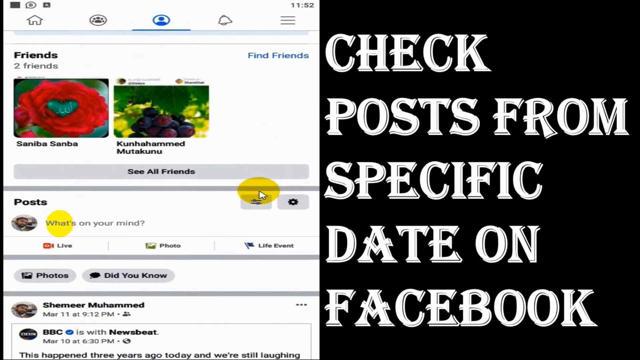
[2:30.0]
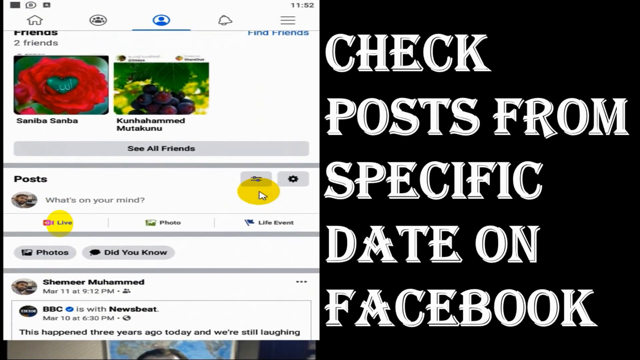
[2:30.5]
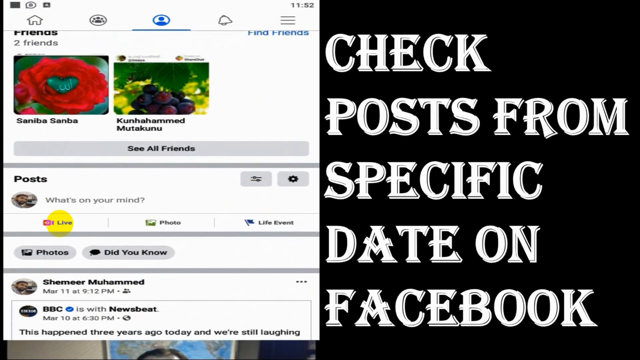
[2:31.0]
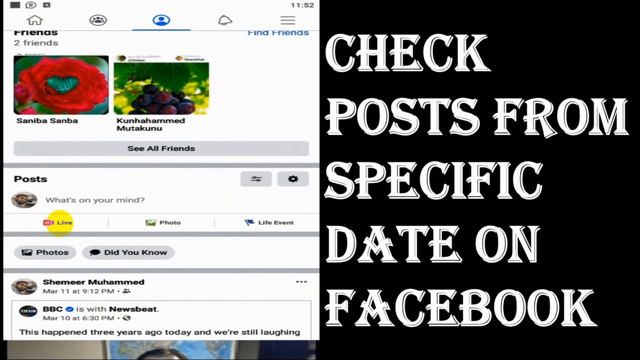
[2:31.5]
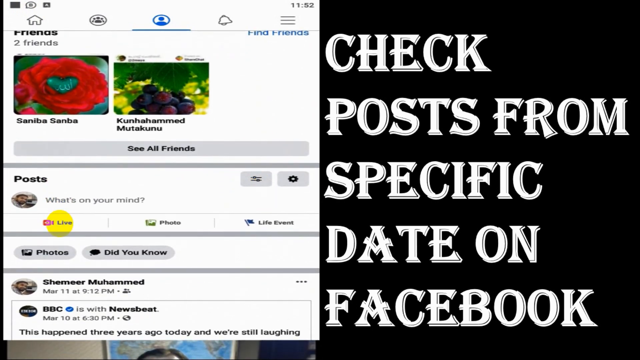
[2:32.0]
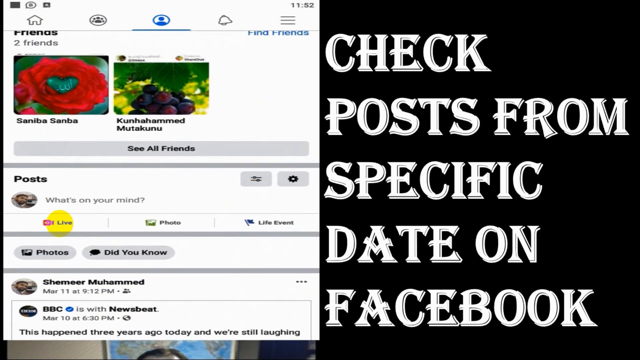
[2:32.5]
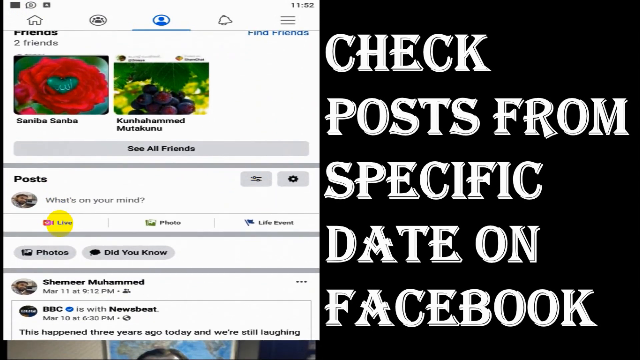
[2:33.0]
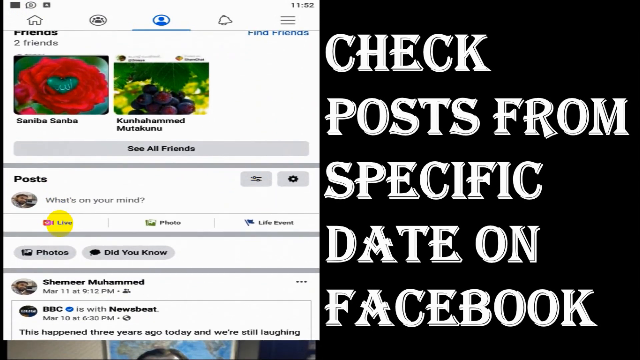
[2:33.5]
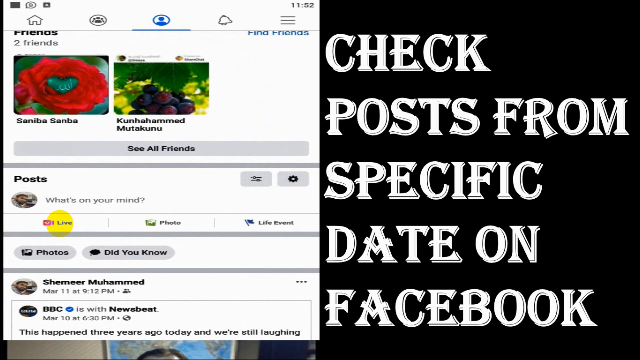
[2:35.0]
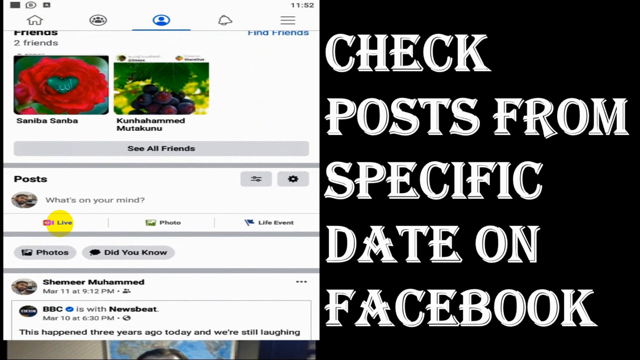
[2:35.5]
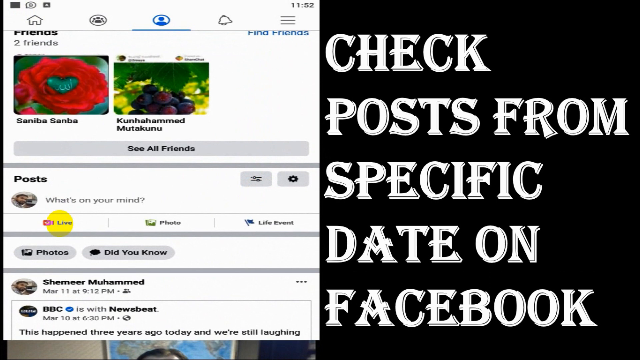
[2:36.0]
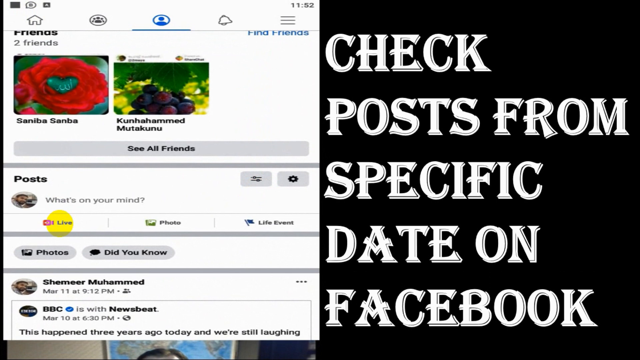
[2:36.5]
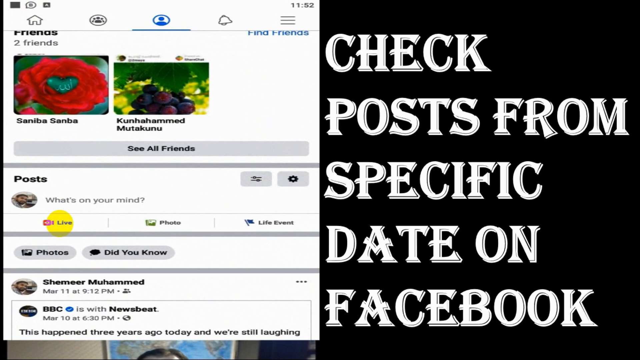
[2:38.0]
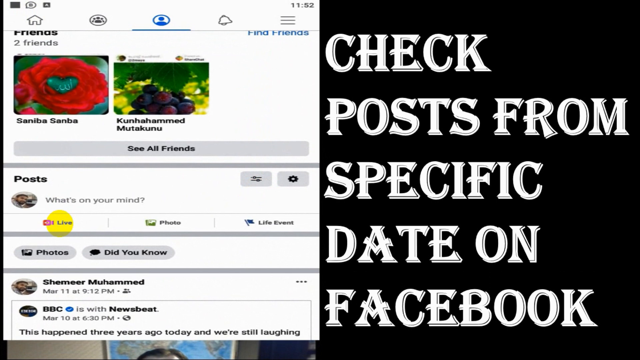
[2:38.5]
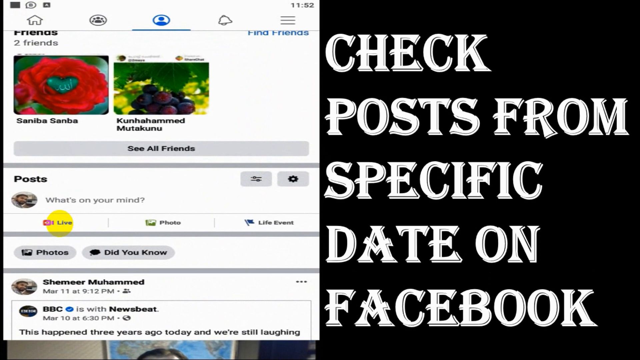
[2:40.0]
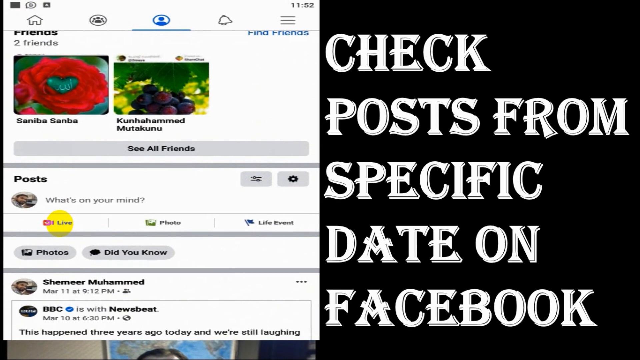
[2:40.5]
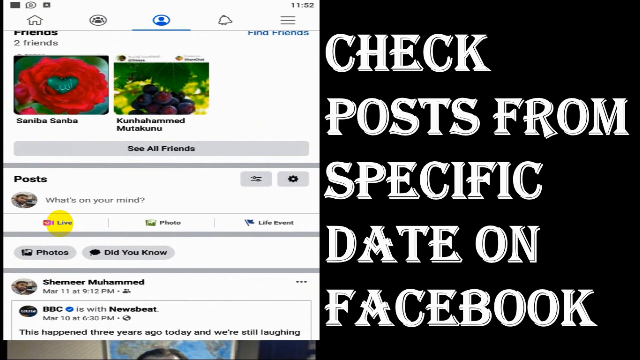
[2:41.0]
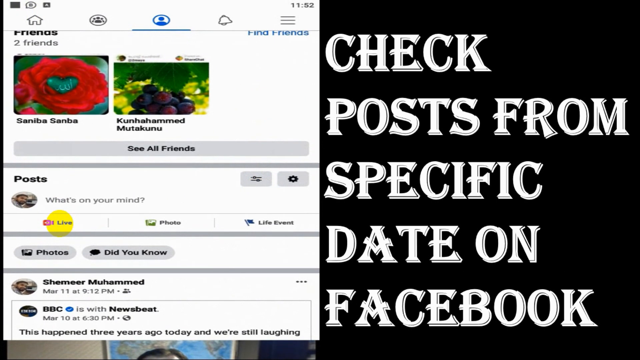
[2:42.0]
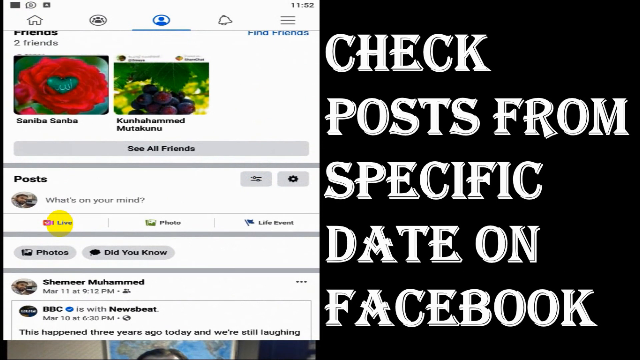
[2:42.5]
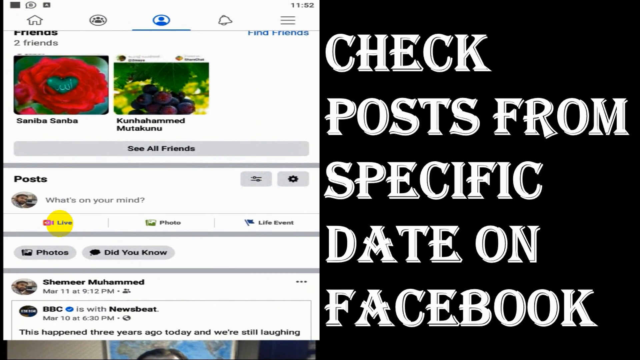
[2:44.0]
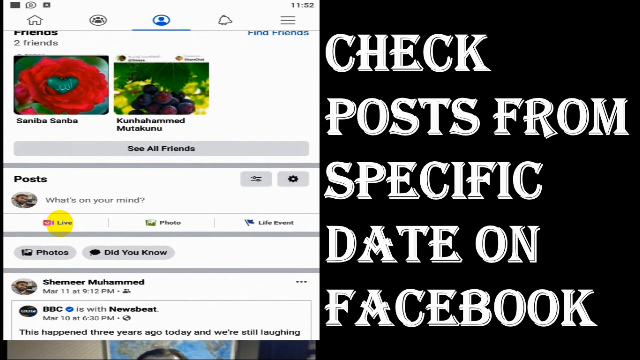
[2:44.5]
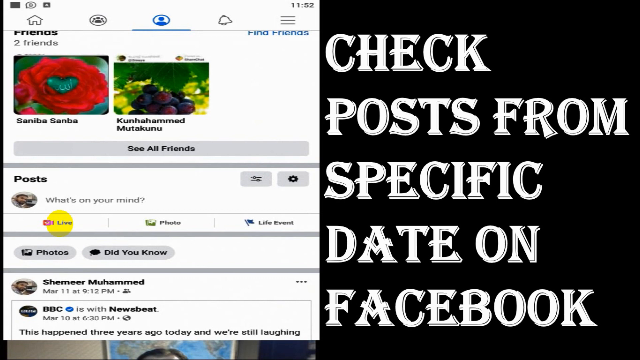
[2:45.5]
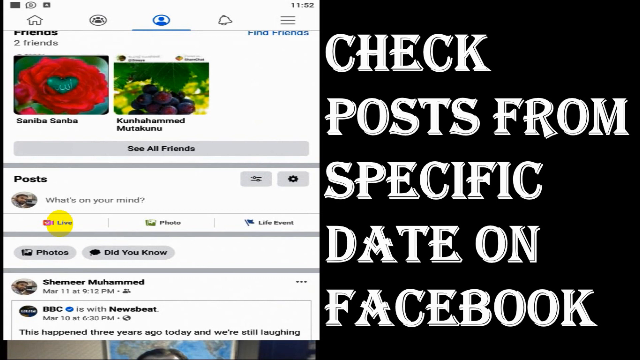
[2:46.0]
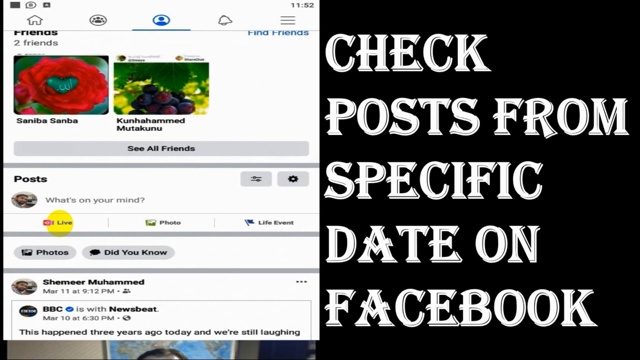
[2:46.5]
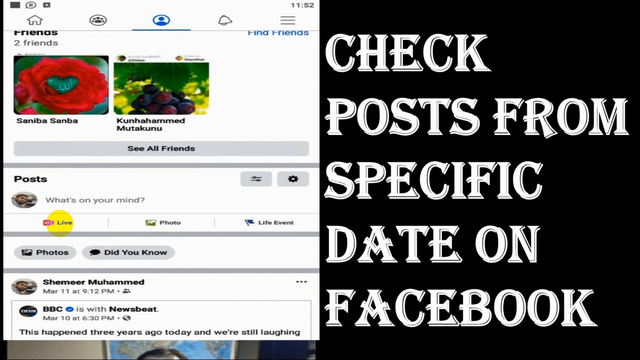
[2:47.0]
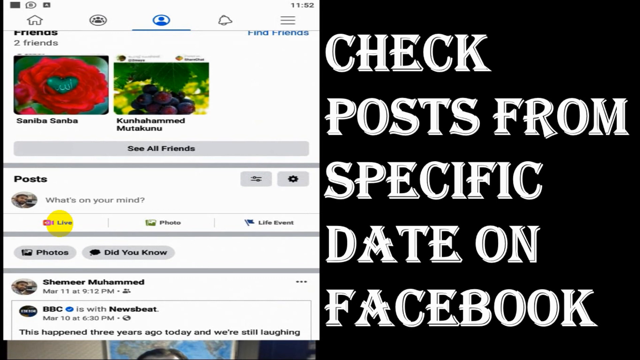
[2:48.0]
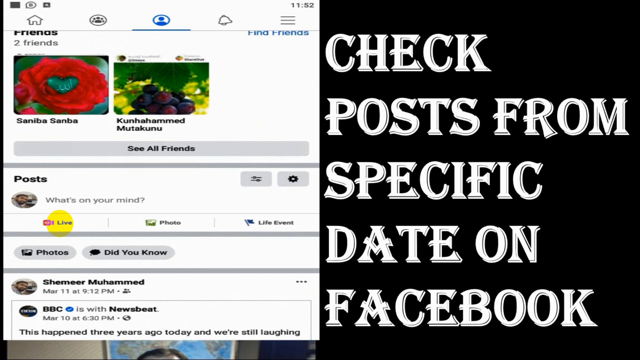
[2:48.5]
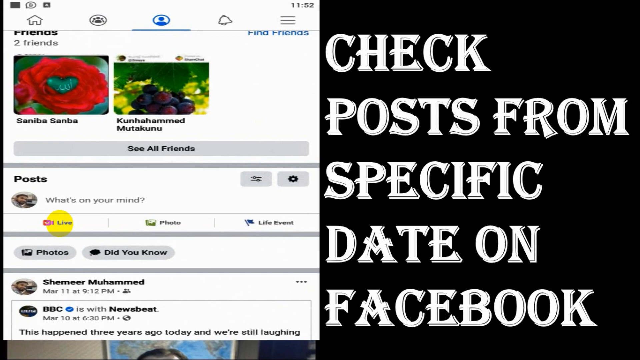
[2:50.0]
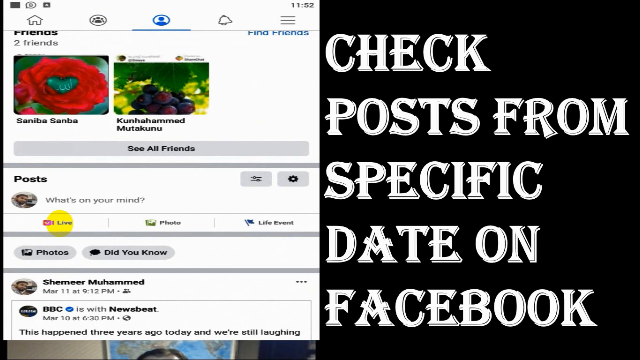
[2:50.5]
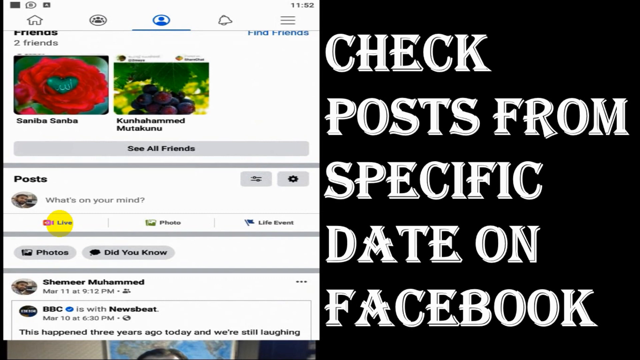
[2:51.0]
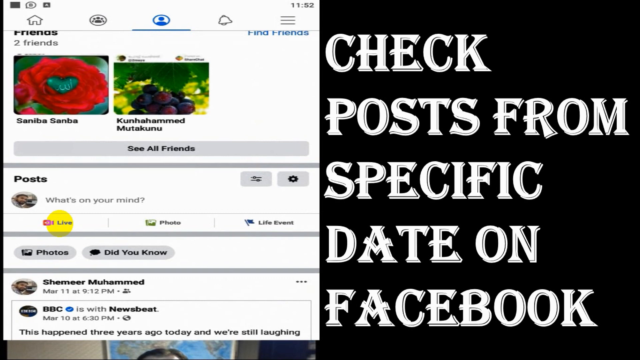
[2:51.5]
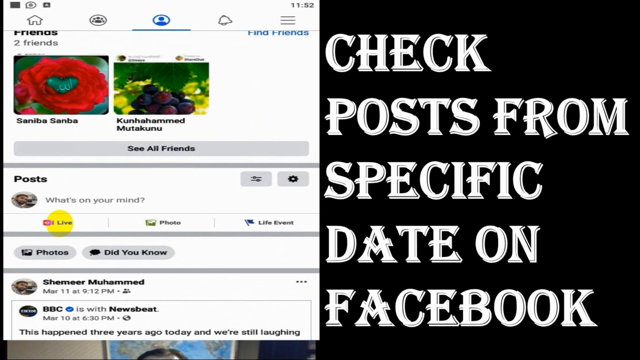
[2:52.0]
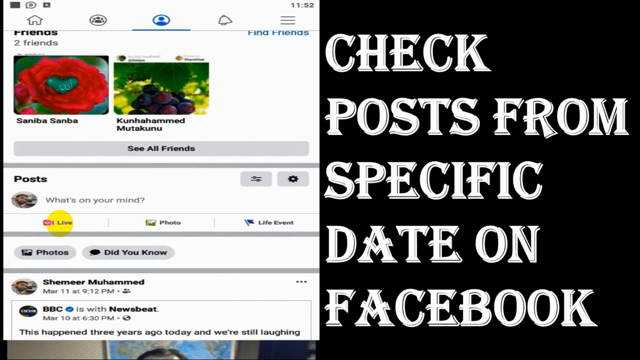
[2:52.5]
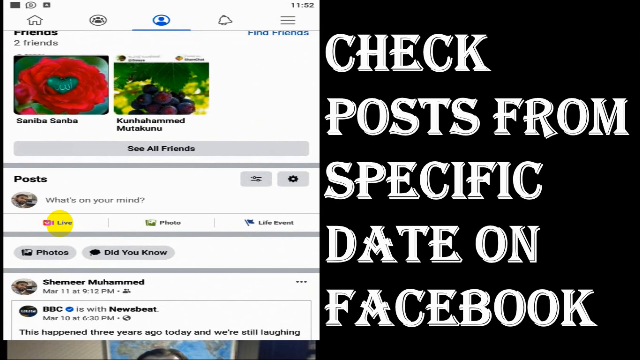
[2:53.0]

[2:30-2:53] A view of Facebook takes up the left side of the screen, while the words "check posts from specific date on Facebook" are displayed on the right in white text over a black background. A mouse cursor with a yellow circle around it is visible. The Facebook feed is scrolled downward slightly and comes to a stop; this is the final action shown. A yellow circle is over the word "live" on the left middle portion of the Facebook page. The mouse cursor is gone, leaving only this yellow circle, which is not the circle that was around the cursor; it appears to be secondary and does not represent the cursor's location. Nothing happens for a good amount of time for the remainder of the video.